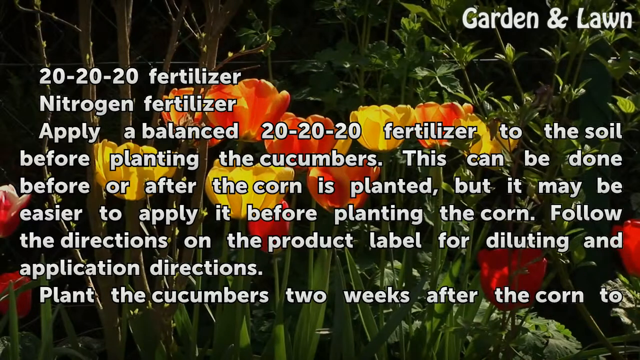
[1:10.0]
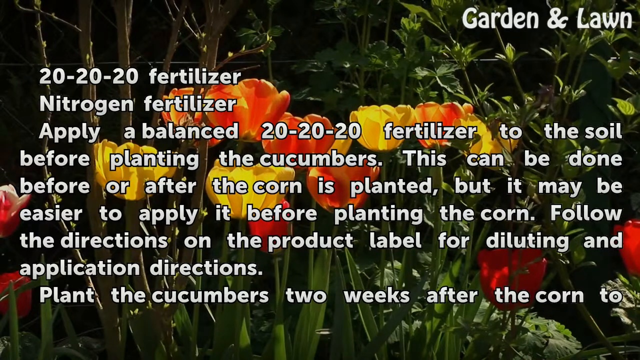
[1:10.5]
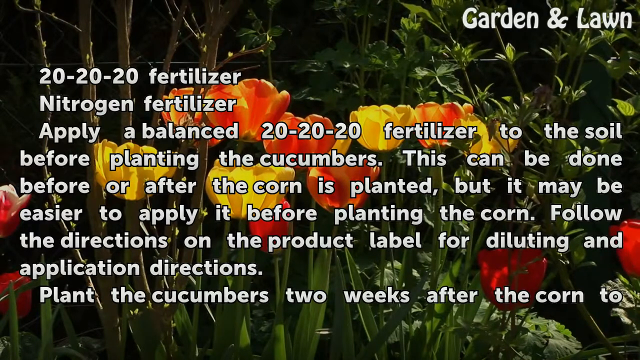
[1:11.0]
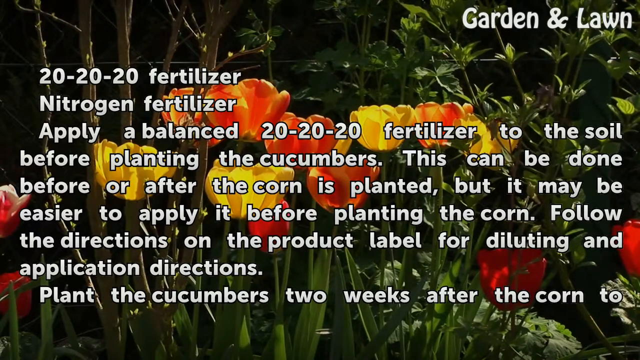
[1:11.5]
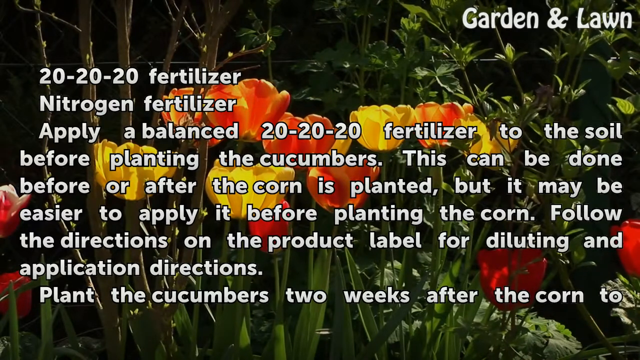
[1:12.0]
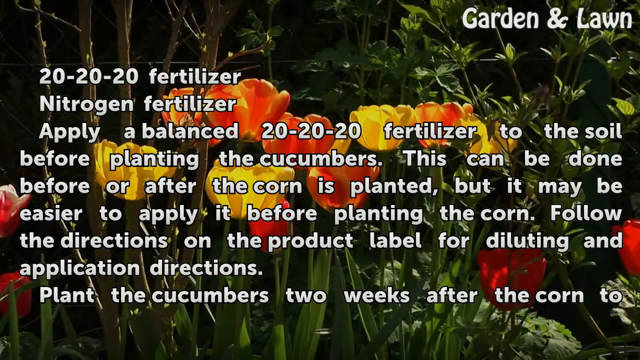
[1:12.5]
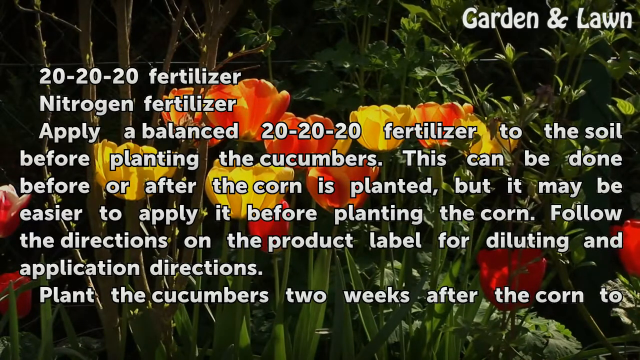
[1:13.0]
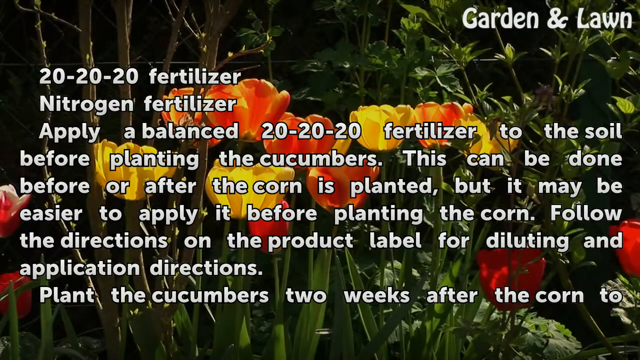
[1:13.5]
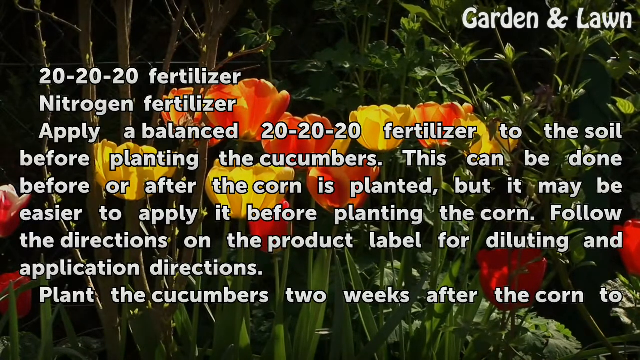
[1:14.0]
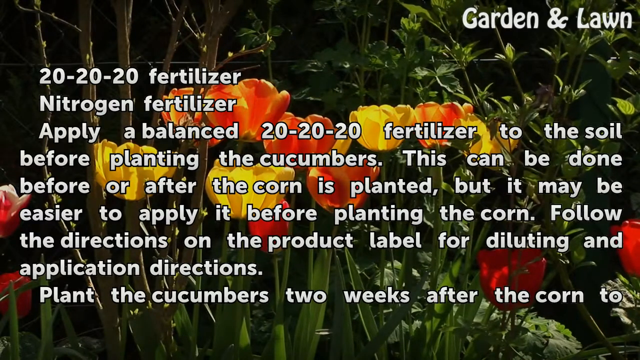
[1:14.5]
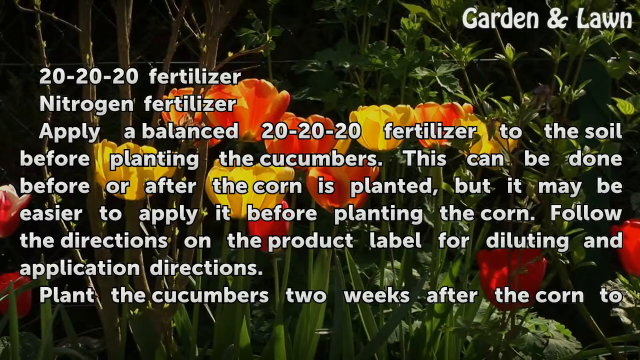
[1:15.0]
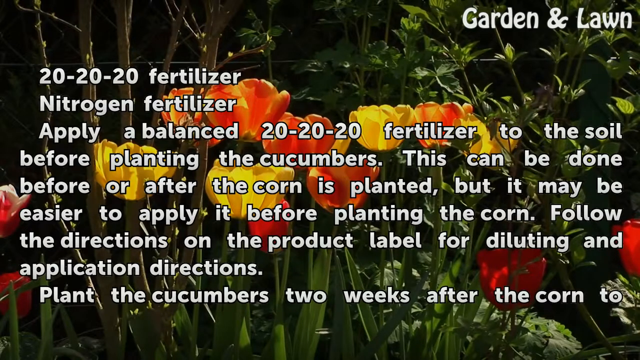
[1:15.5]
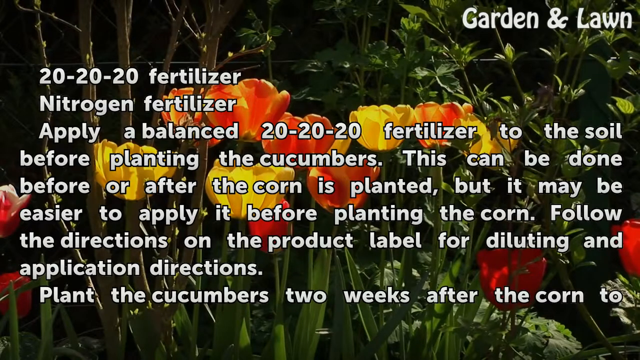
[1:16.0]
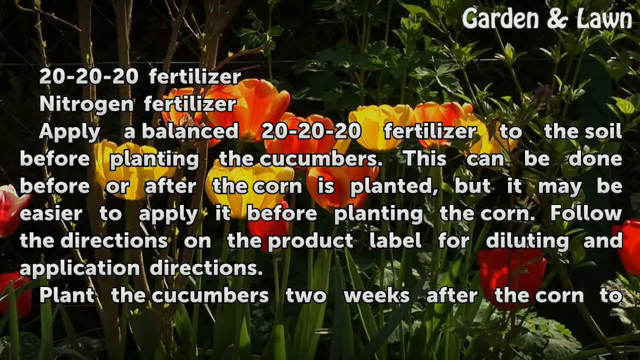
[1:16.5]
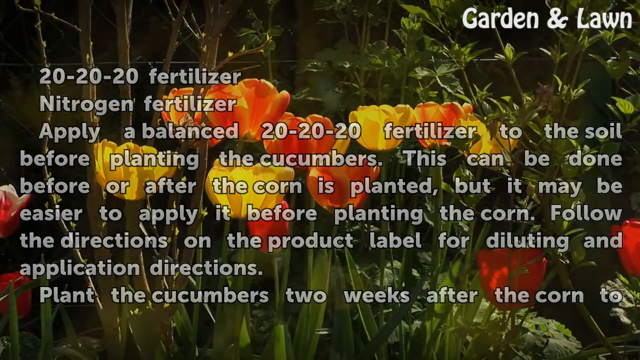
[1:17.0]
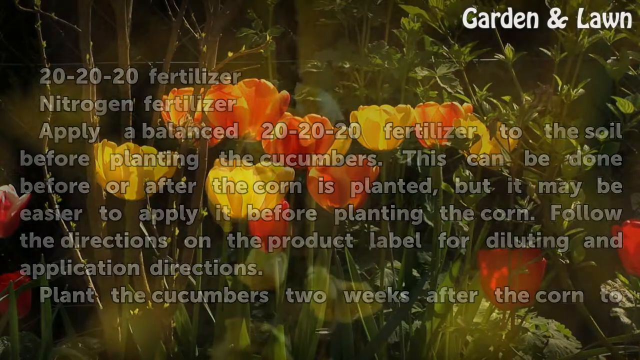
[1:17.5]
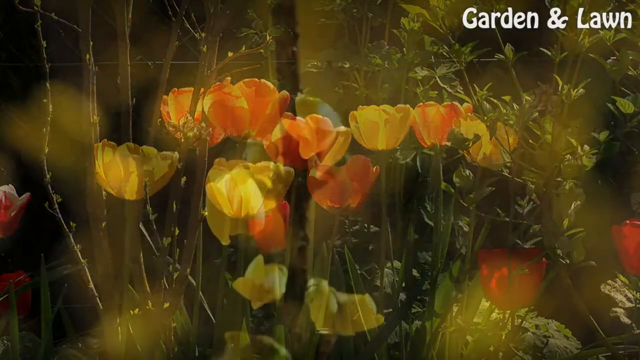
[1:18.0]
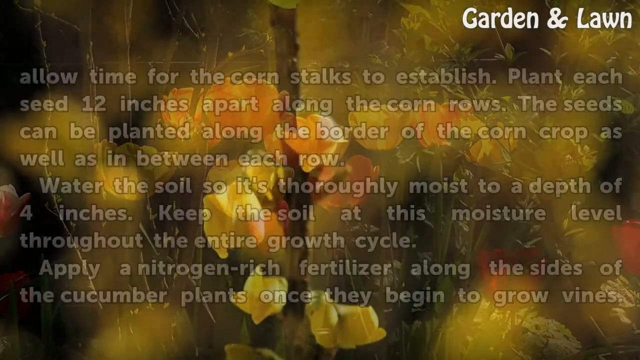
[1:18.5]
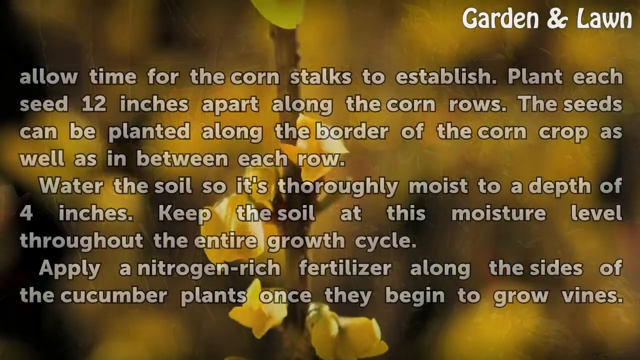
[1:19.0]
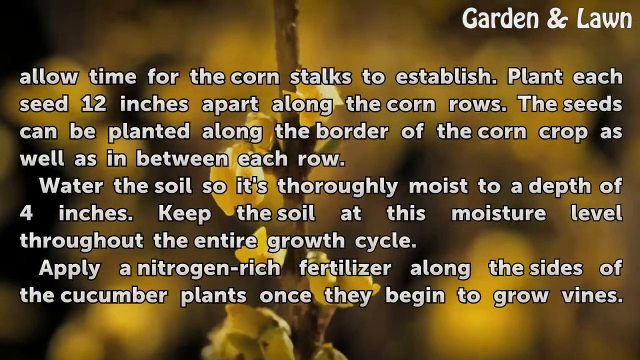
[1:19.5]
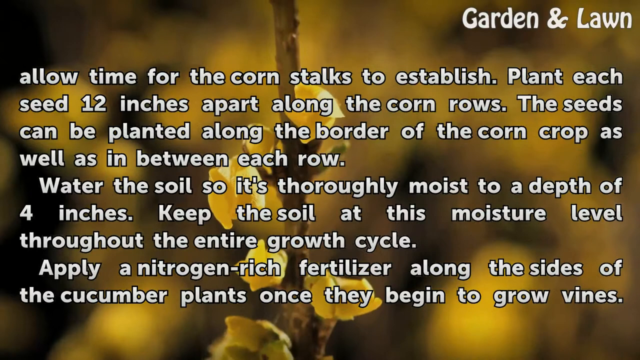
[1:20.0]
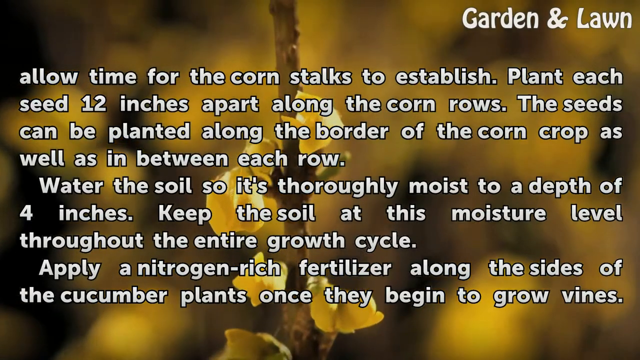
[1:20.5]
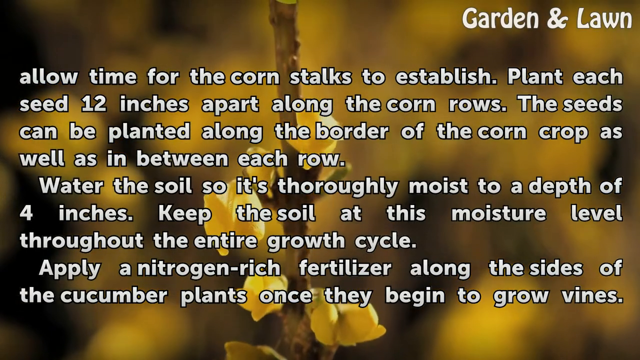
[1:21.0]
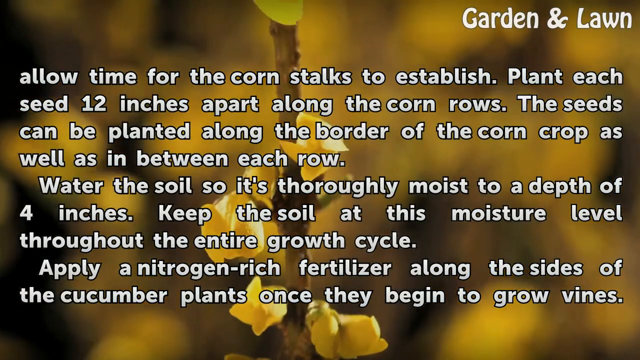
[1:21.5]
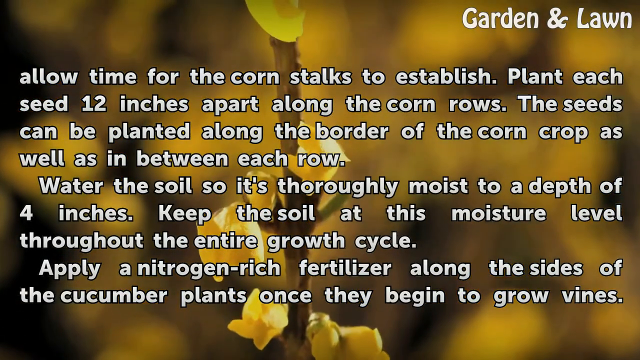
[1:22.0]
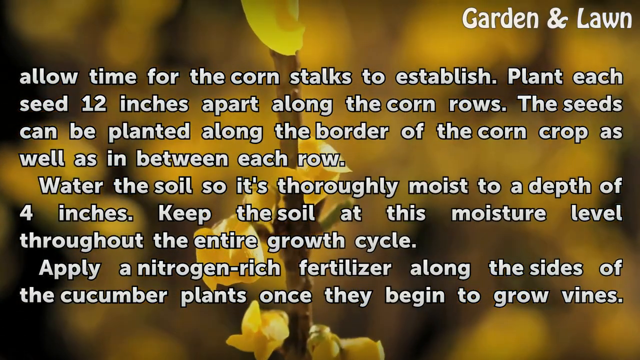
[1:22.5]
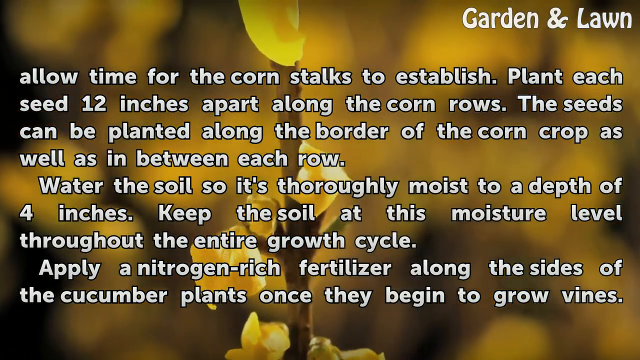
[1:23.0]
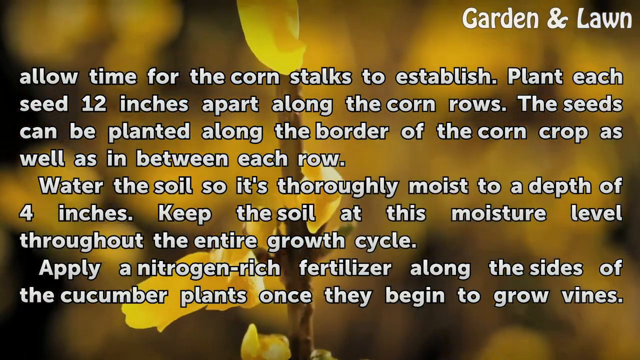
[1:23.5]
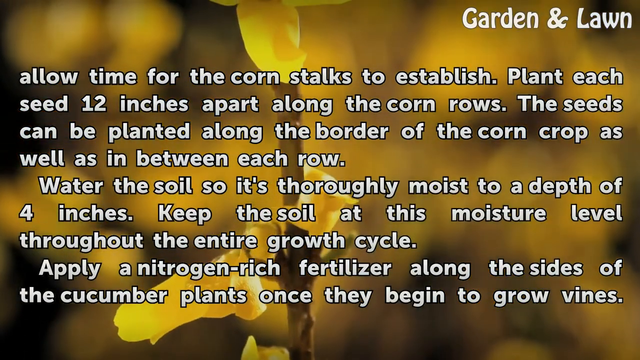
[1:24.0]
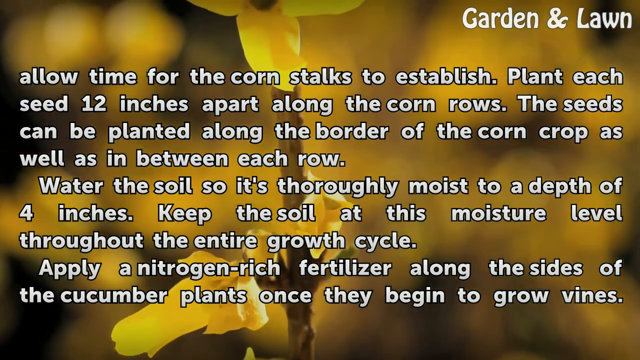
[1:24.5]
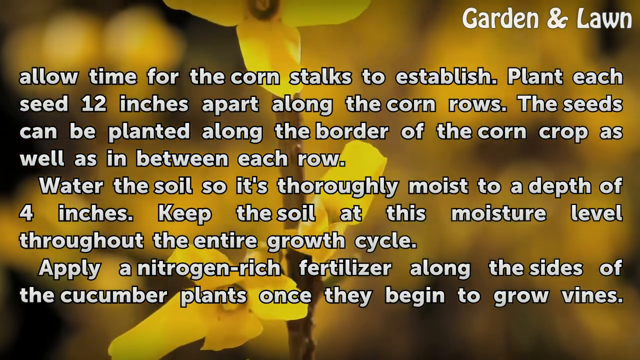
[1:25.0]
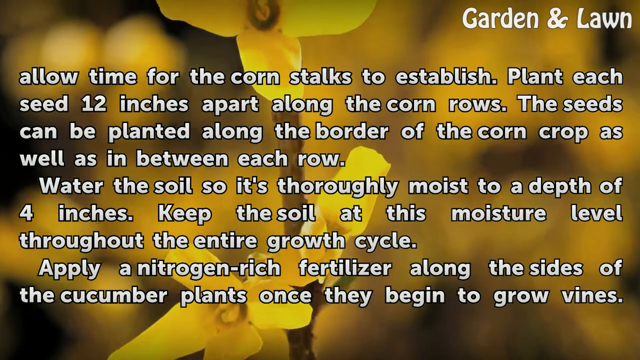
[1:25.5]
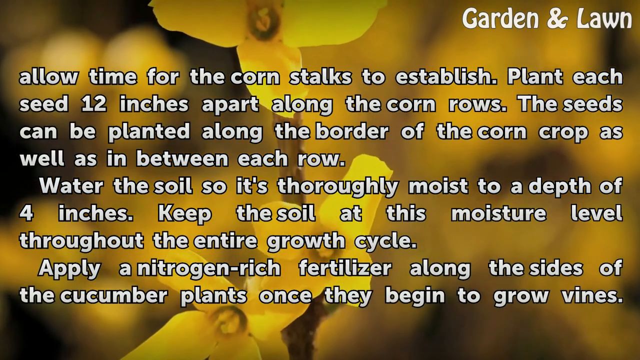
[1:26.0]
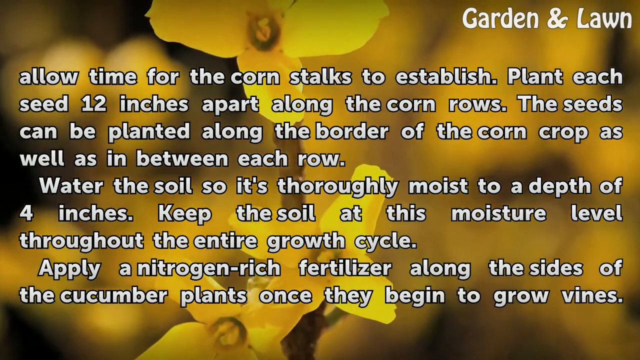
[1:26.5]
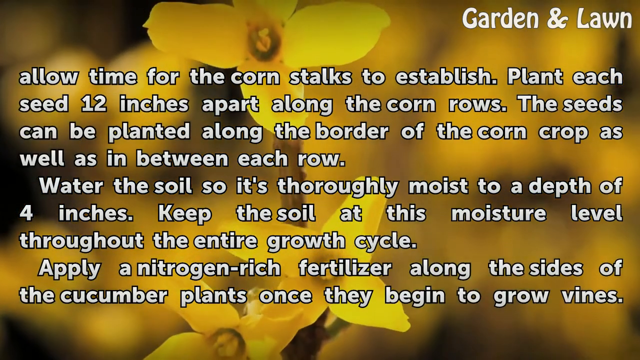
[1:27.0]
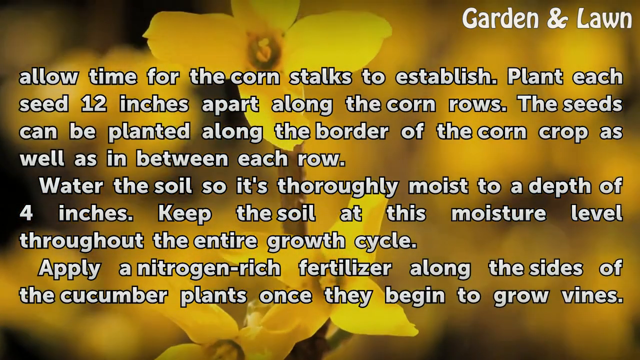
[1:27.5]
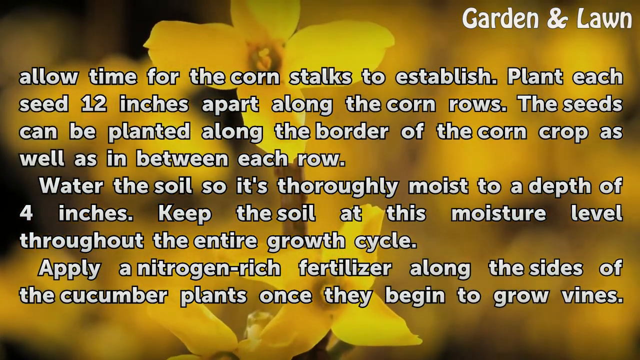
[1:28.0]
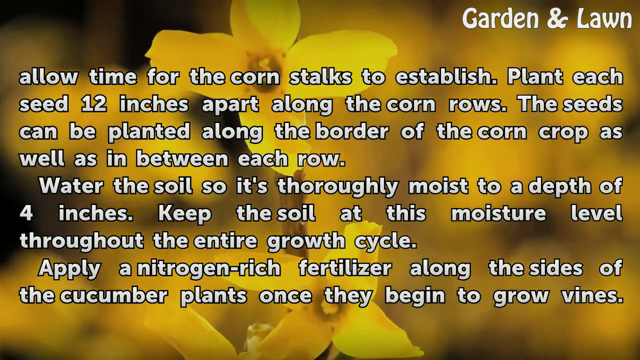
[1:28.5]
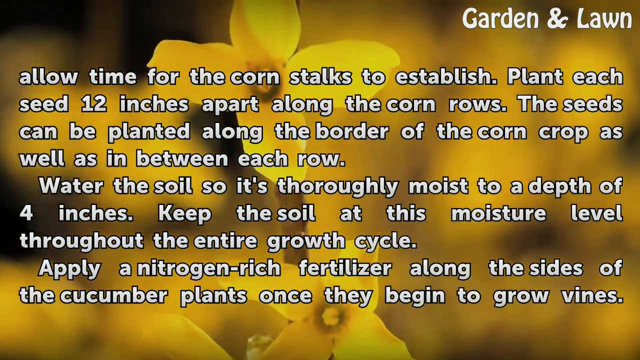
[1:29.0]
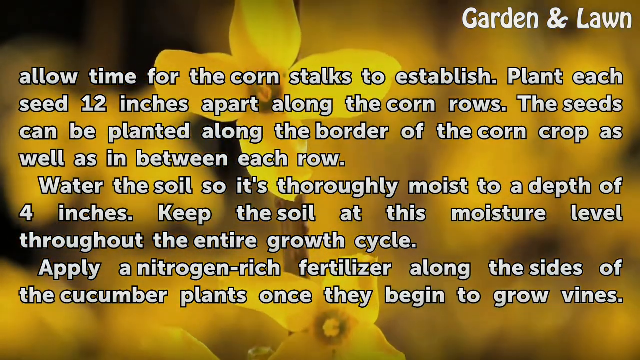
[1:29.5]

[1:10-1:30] A bunch of tulips is in the background, with the text "garden and lawn" in the upper right-hand corner throughout. In the center of the screen, white letters with a black outline read "20-20-20 fertilizer Nitrogen fertilizer Apply a balanced 20-20-20 fertilizer to the soil before planting the cucumbers. This can be done before or after the corn is planted. But it may be easier to apply it before planting the corn. Follow the directions on the product label for diluting and application directions. Plant the cucumbers two weeks after the corn to"; the rest is cut off. The screen fades into time-lapse footage of a yellow dotted loosestrife plant climbing up the stalk and unfurling its petals, with the text "Allow time for the corn stalks to establish. Plant each seed 12 inches apart along the corn rows. The seeds can be planted along the border of the corn crop as well as in between each row. Water the soil so it's thoroughly moist to a depth of 4 inches. Keep the soil at this moisture level throughout the entire growth cycle. Apply a nitrogen-rich fertilizer along the sides of the cucumber plants once they begin to grow vines."